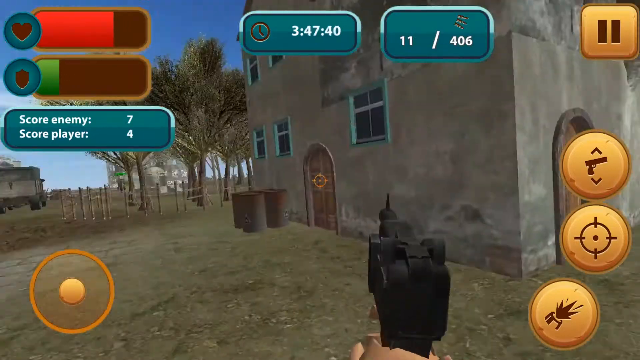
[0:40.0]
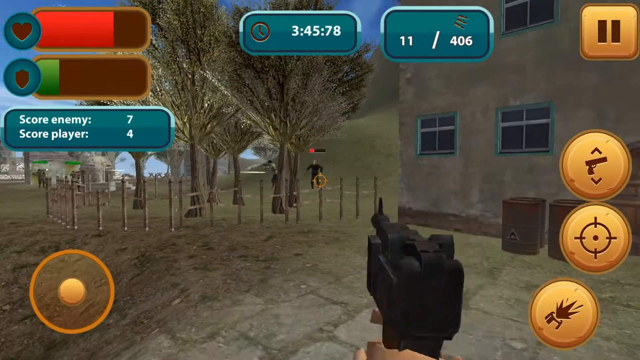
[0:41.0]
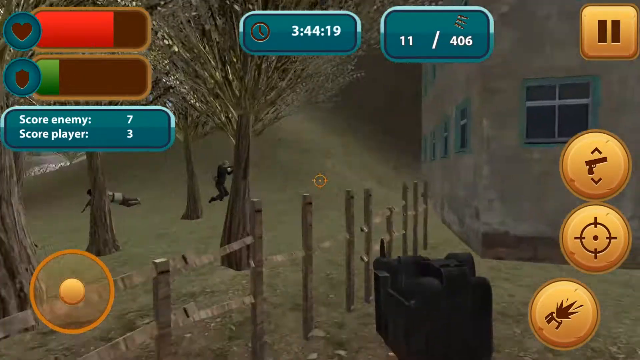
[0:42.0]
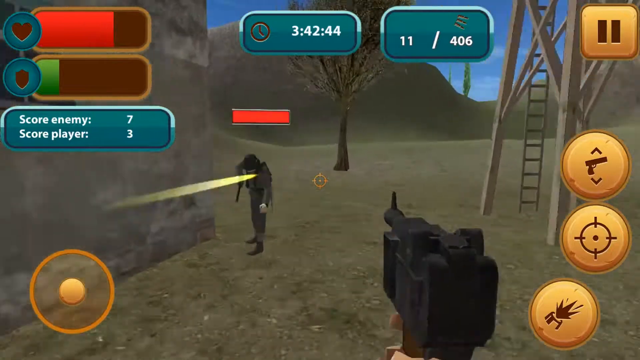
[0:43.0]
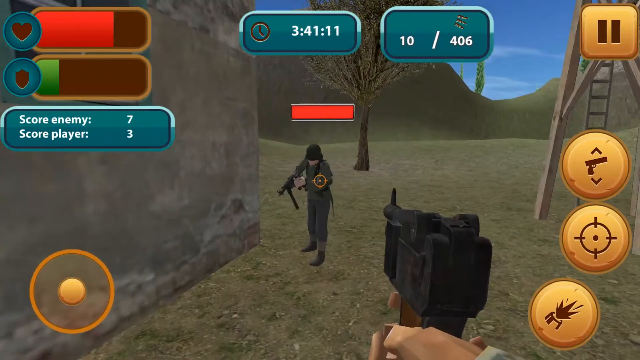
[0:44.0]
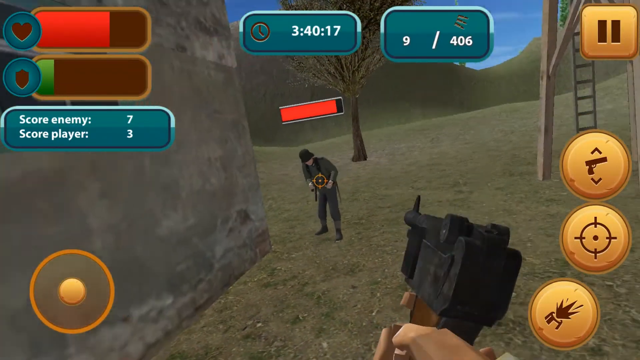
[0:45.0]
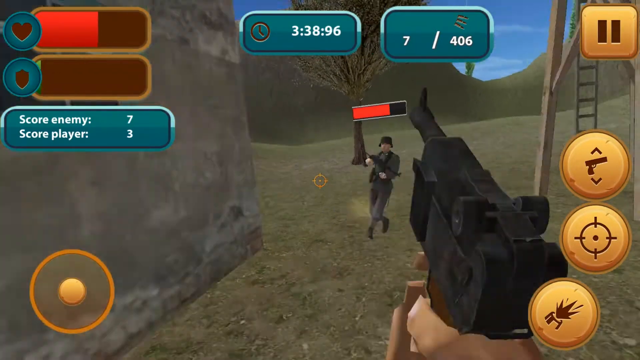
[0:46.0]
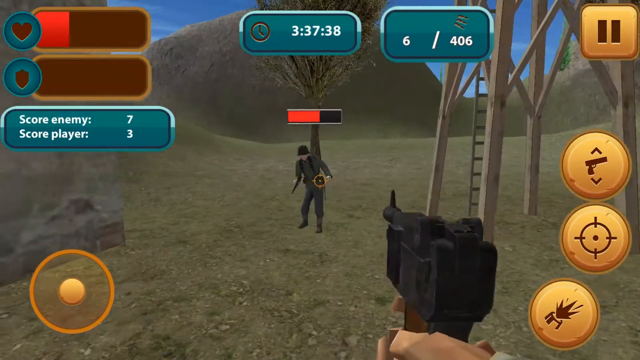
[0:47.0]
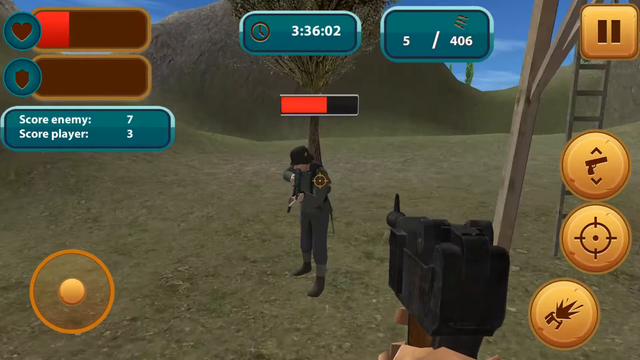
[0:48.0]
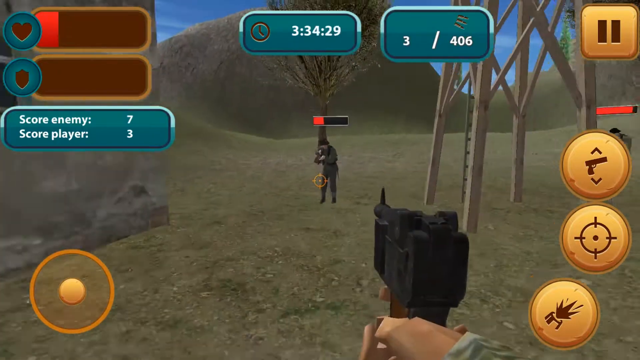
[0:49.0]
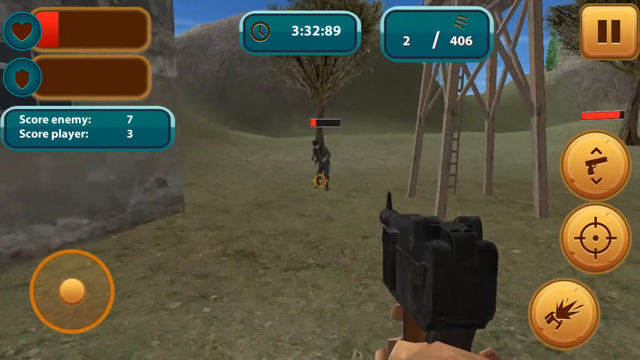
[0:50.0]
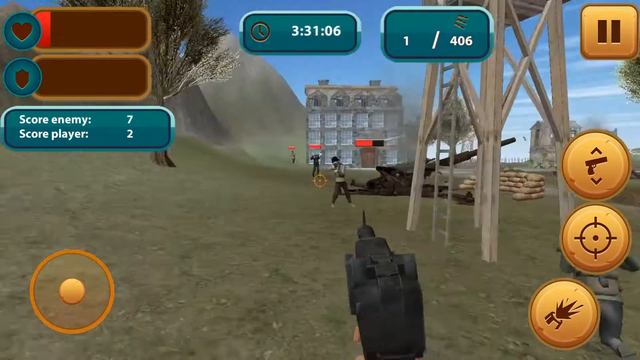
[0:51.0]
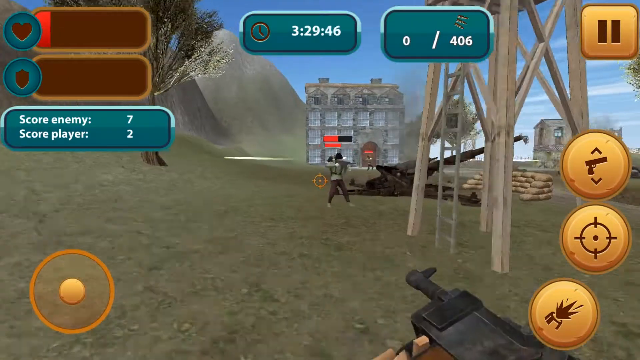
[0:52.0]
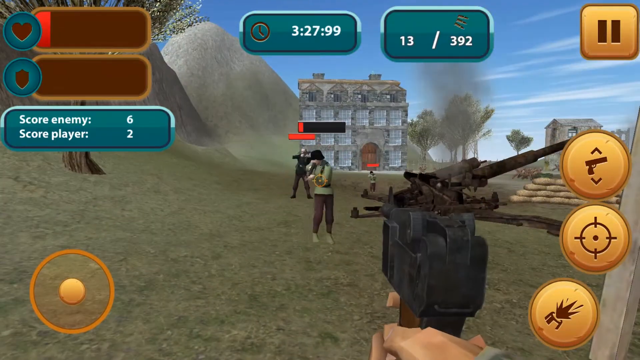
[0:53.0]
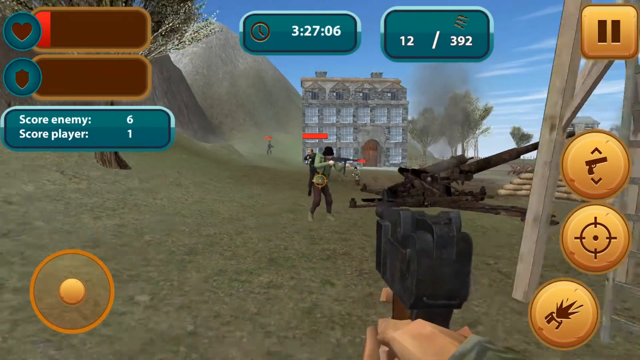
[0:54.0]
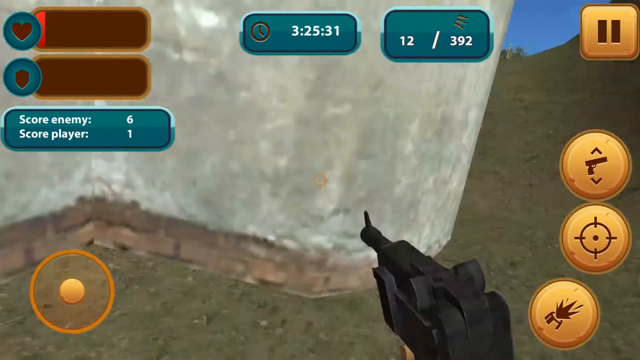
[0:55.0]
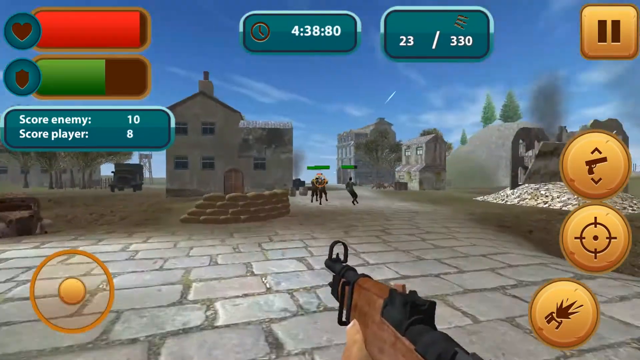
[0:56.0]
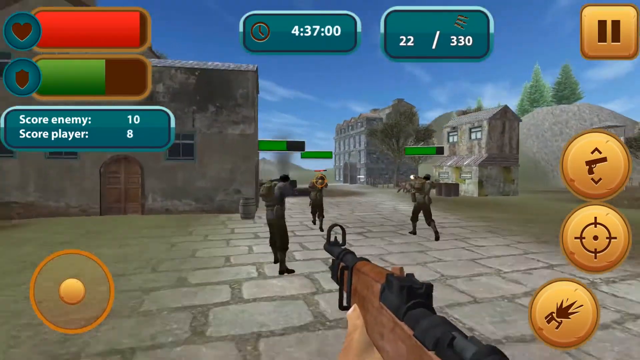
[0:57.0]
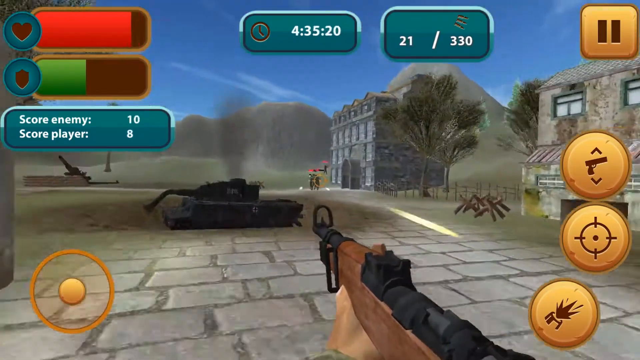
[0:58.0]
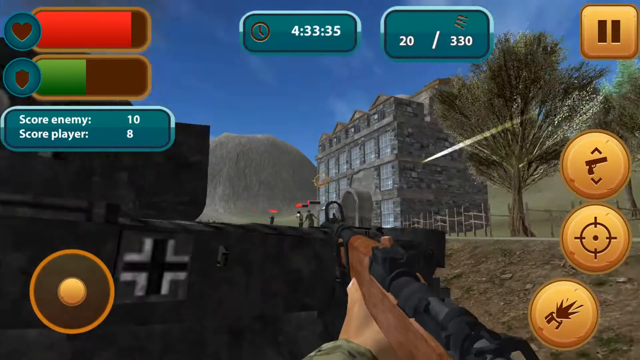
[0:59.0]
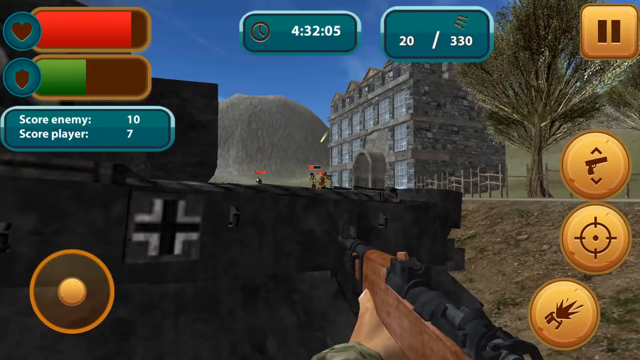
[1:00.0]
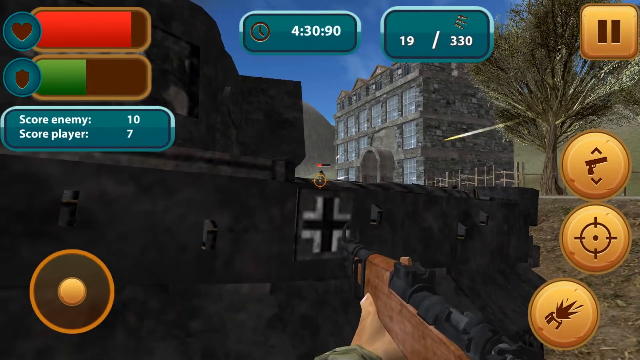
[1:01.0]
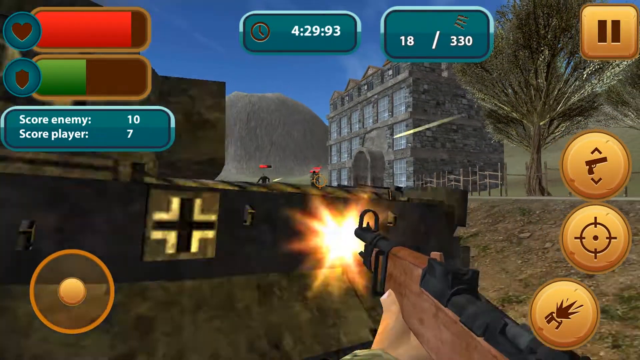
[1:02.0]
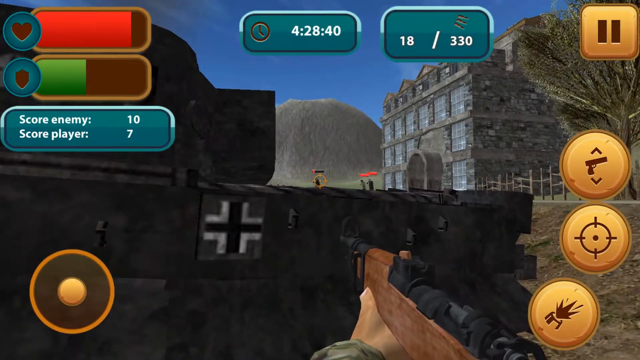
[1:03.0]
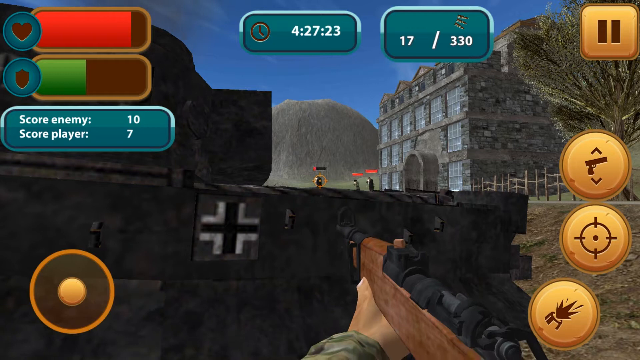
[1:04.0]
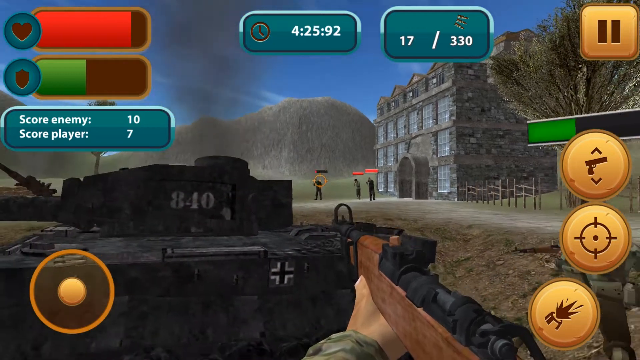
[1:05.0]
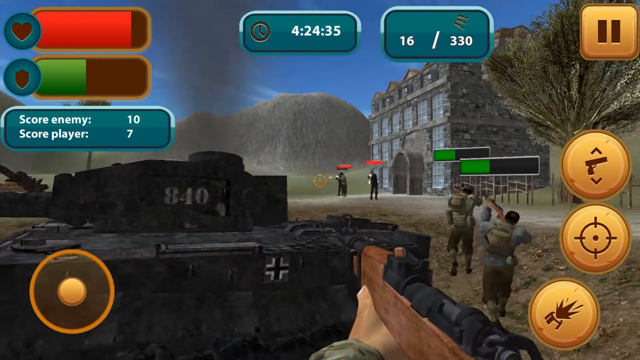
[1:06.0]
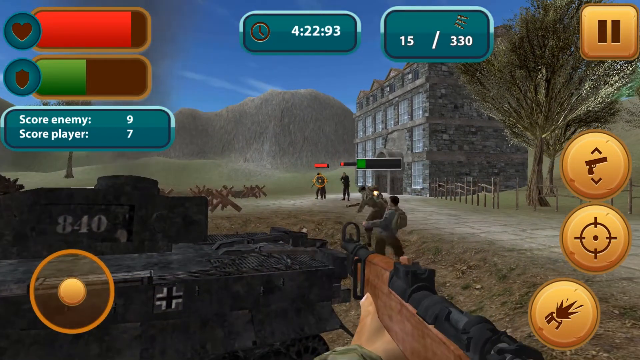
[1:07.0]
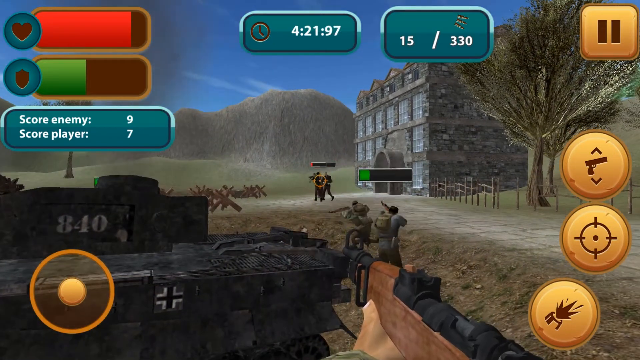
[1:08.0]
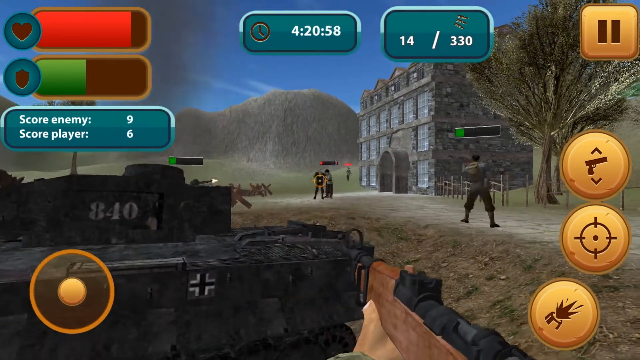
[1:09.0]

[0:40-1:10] The German Luger is used. Some AI characters, apparently, shoot what looks like a Grease Gun, or maybe an MP5, on the battlefield. They also use what looks like a Lee-Enfield or another World War II rifle. There is apparently a broken-down German Panzer tank. Trees are scattered around the battlefield, and there is a broken-down artillery gun. There are many buildings; one of them looks still intact, while the rest are kind of disheveled and falling apart. Many barrels are scattered around, and many sandbags are littered throughout. At one point there appears to be some sort of bayonet charge, though no bayonet is visible on the end of the gun.